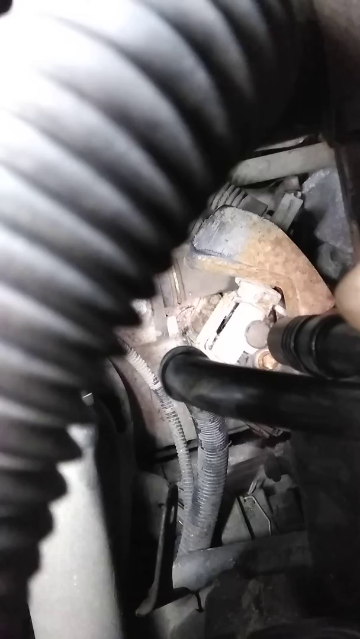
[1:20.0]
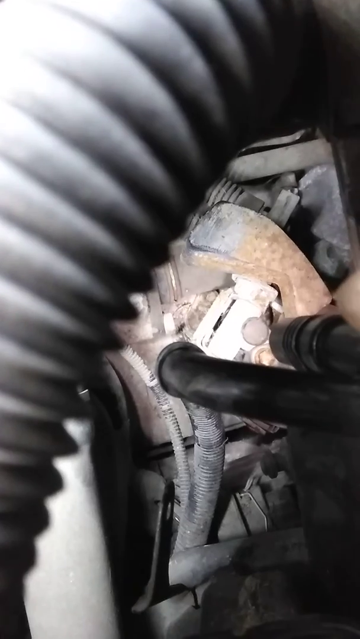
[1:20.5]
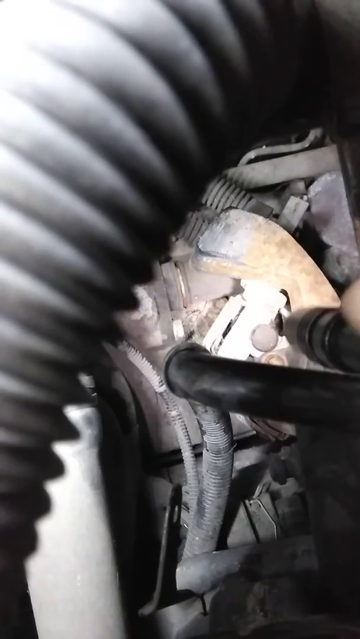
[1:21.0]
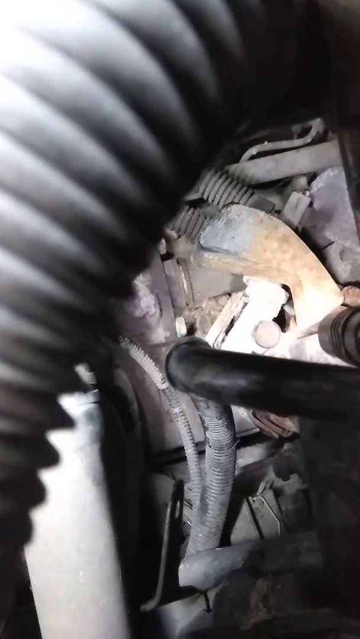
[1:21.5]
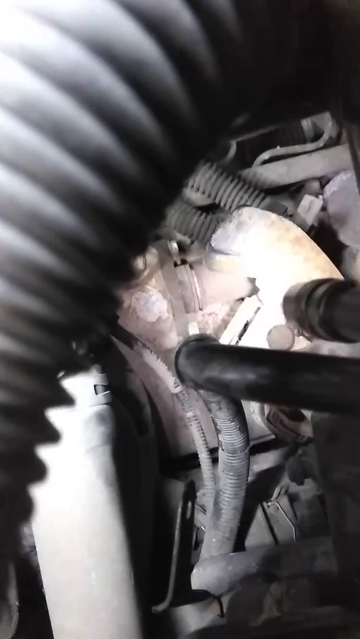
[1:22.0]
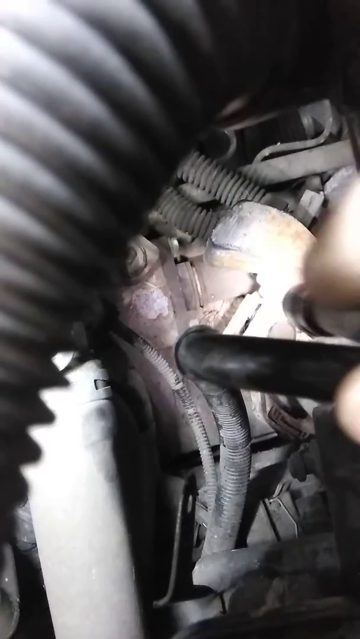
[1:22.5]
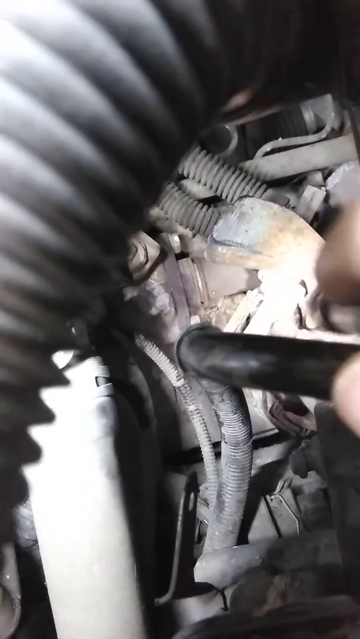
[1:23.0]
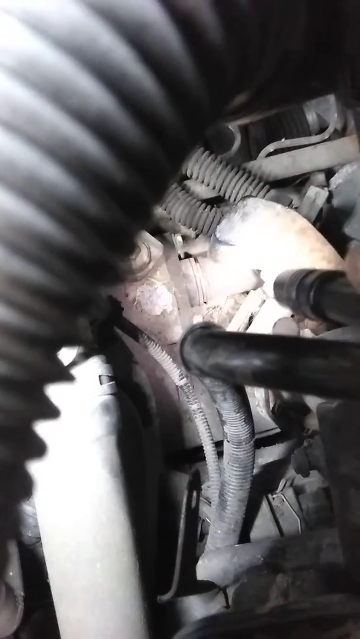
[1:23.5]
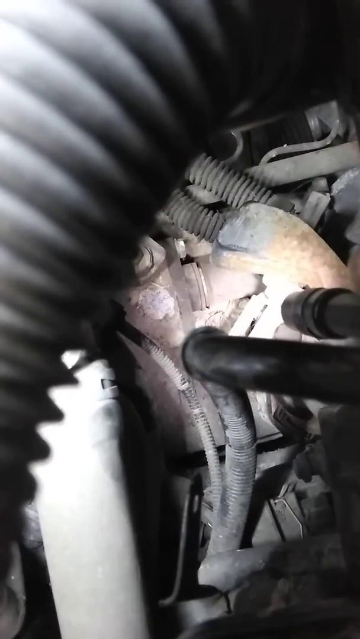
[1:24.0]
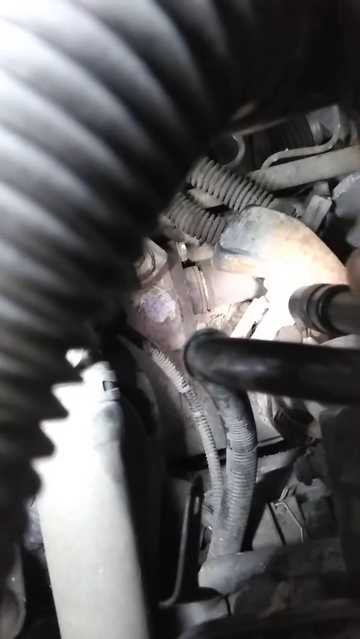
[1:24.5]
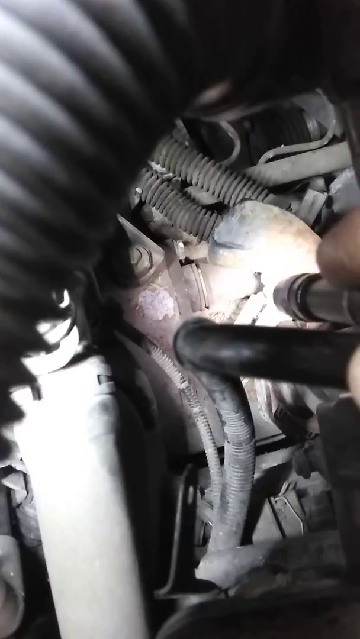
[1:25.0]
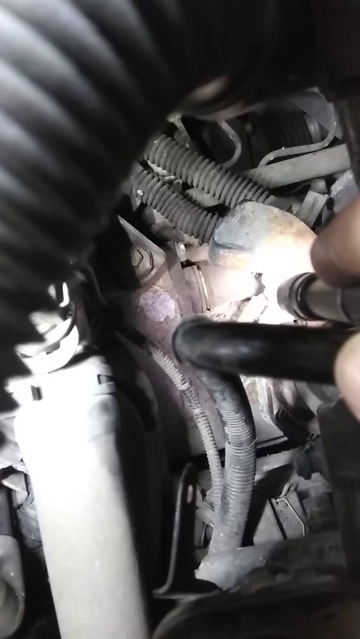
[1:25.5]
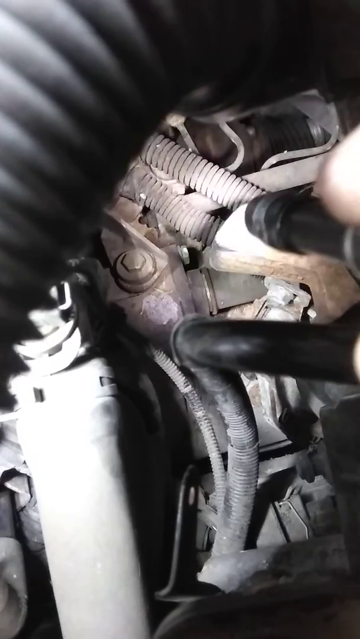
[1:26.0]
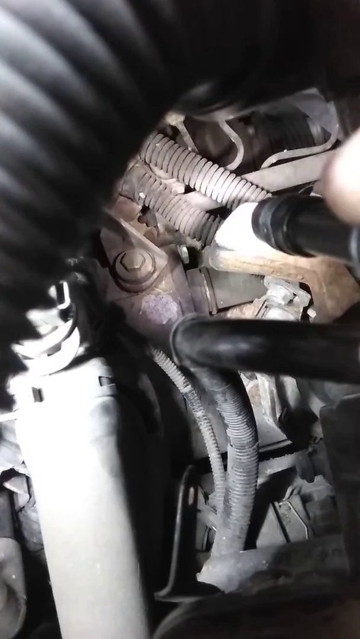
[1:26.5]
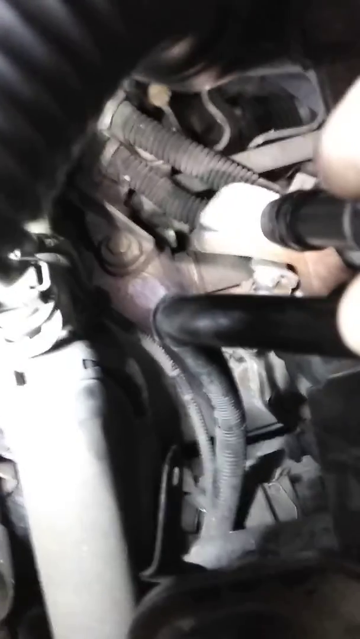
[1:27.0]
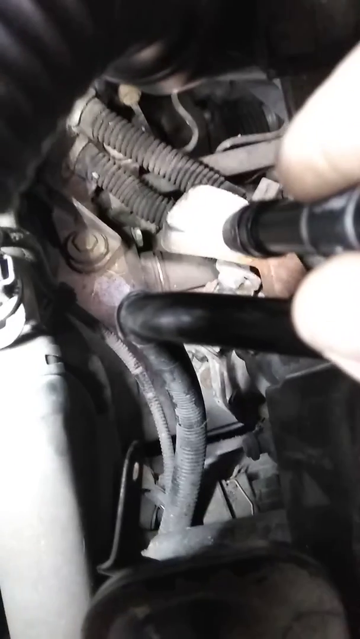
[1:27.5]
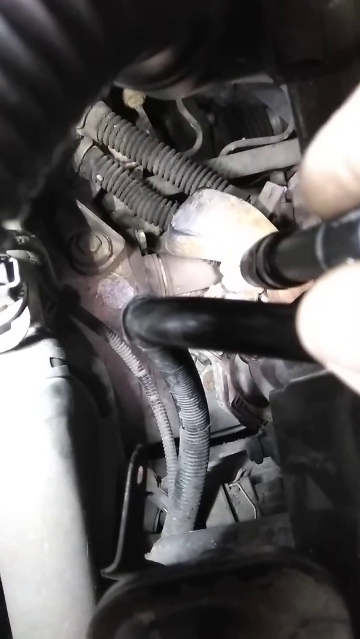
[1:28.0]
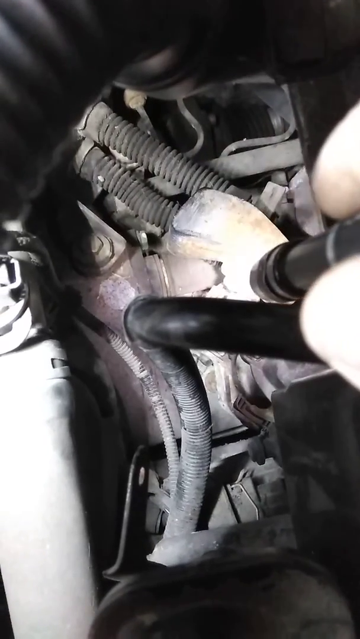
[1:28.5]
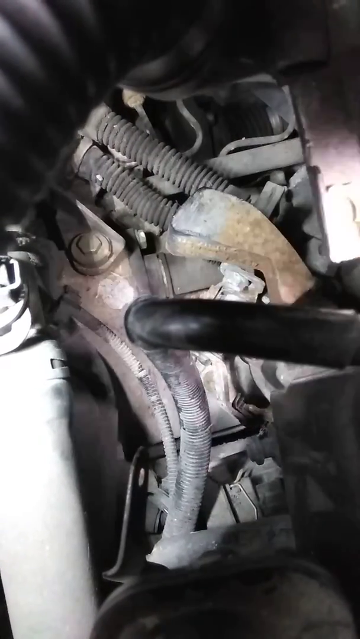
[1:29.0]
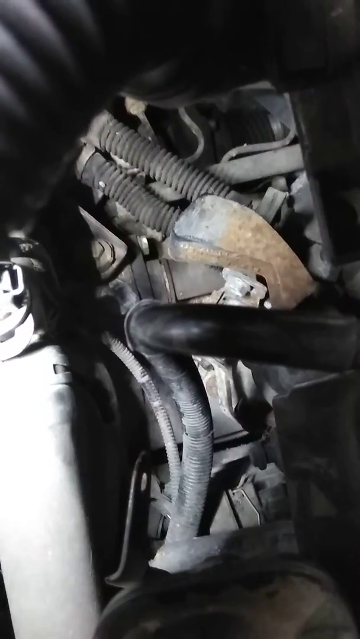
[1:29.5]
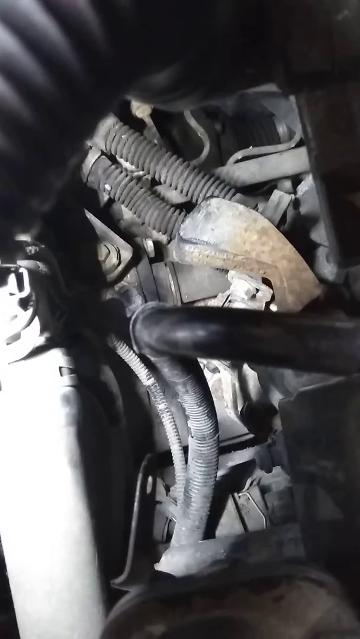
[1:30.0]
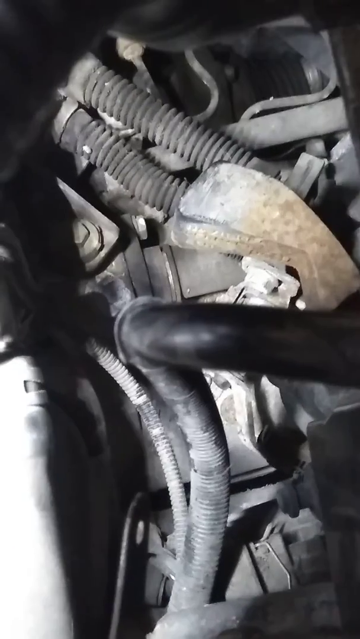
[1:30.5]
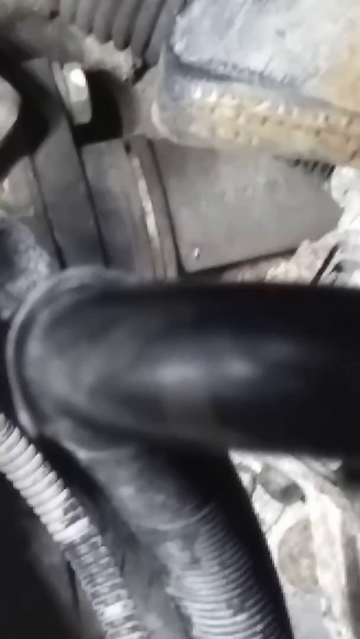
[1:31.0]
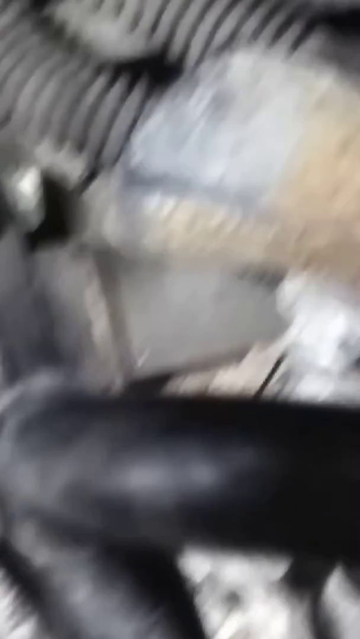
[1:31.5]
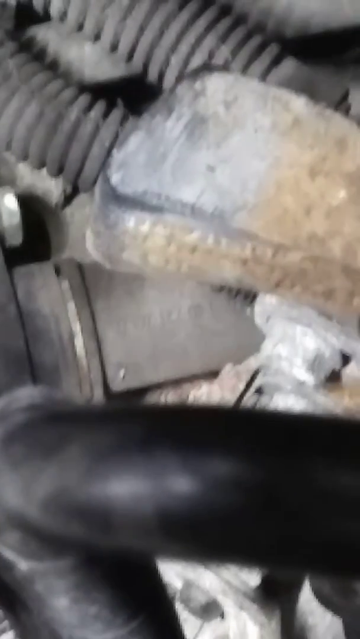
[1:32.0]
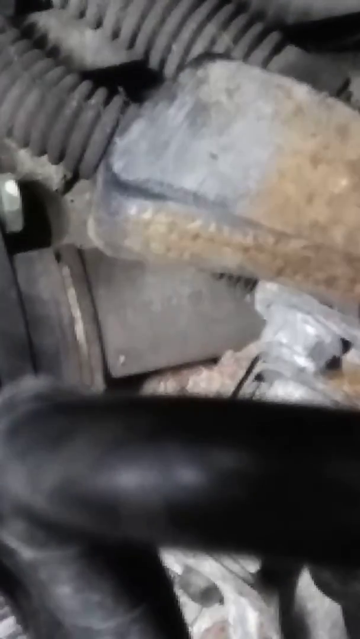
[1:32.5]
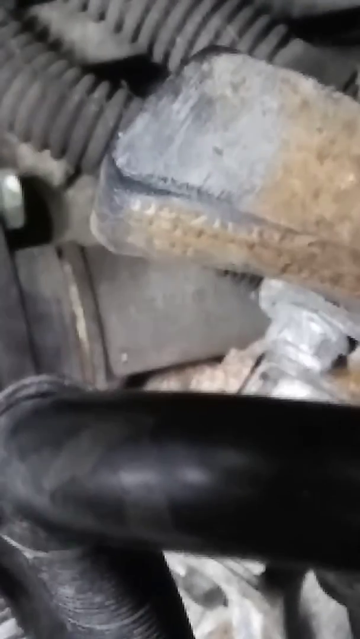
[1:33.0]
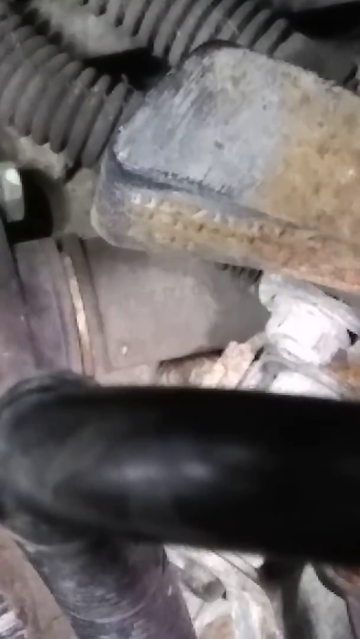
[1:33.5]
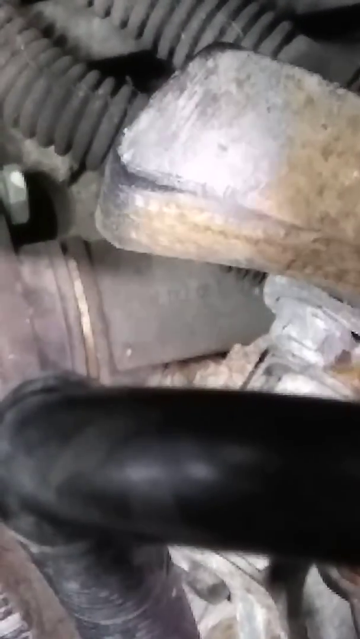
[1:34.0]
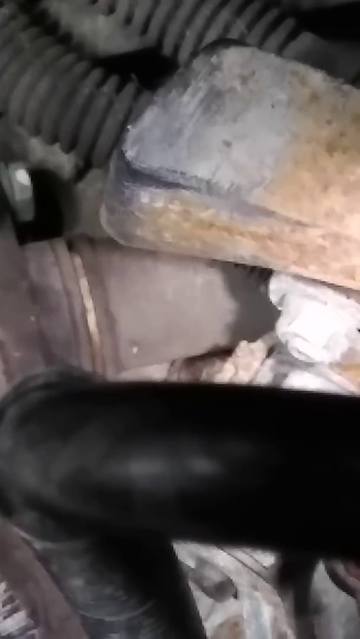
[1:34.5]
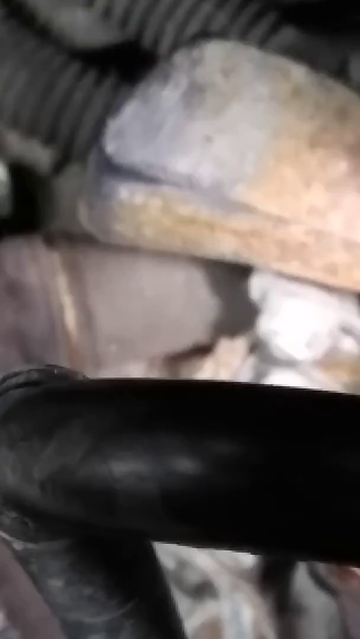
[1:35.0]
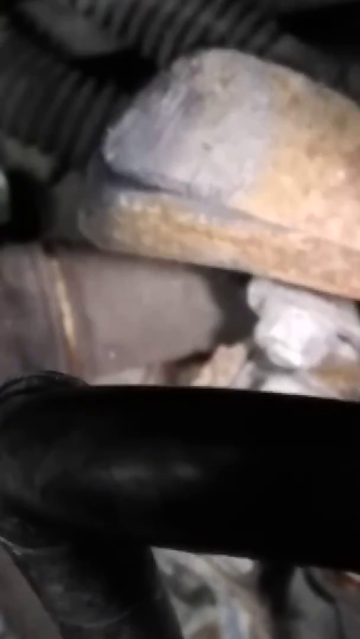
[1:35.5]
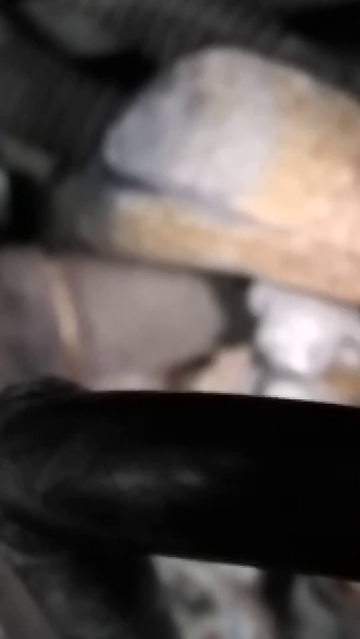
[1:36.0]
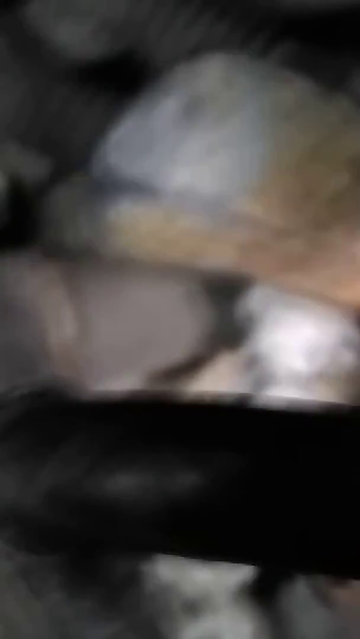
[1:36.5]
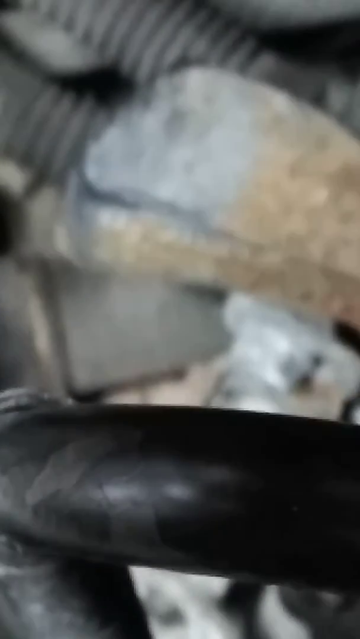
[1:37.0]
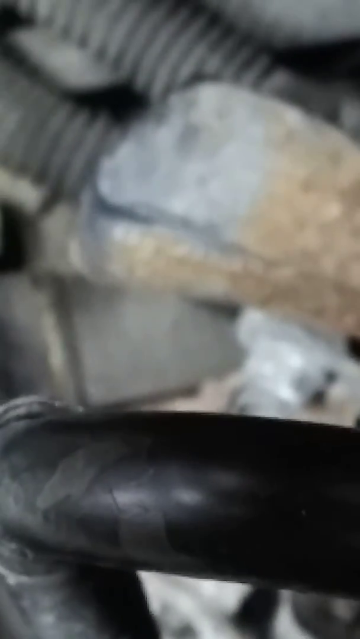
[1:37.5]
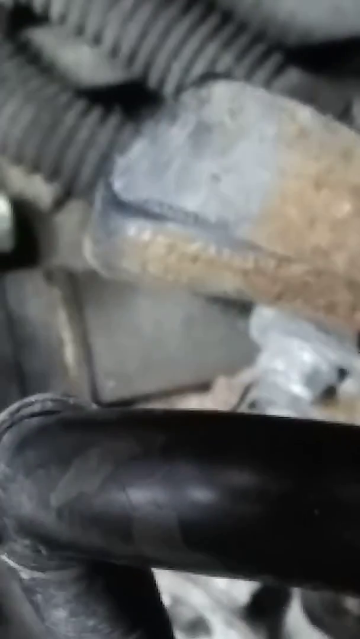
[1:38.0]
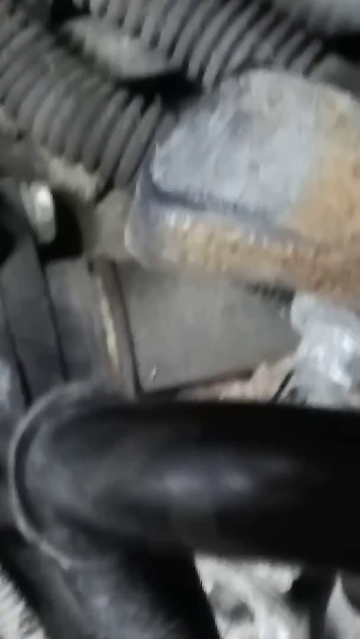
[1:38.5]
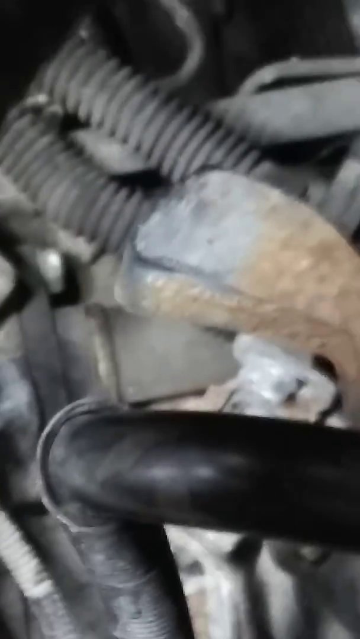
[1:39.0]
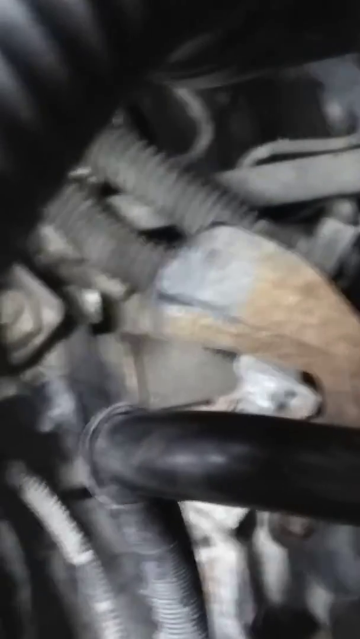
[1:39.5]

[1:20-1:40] The person shines their torch onto the floor of the engine, which goes down about two feet, maybe two or three feet deep. At the top of the screen there are two plasticky tubes resembling vacuum cleaner tubes, and to the left of them is something like a bolt. In the foreground there is another tube at the top left, and at the bottom right there is a small tube. The person holds the torch with their right hand; the torch is very small, perhaps three inches, and quite thin. The camera zooms in very closely on something unclear that appears to be a piece of sort of beige-coloured metal. The camera is a little out of focus as it zooms in, so it is hard to say exactly what is shown.